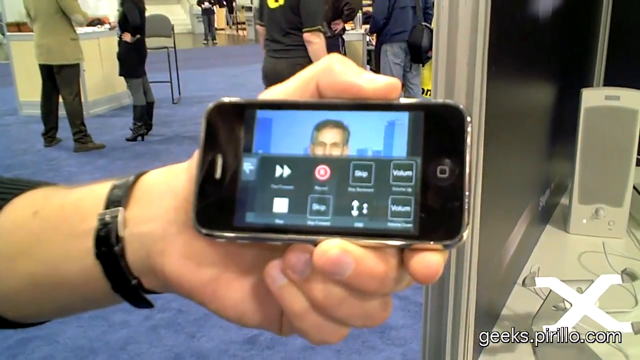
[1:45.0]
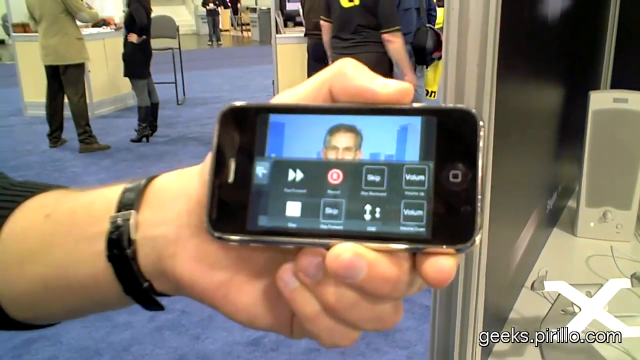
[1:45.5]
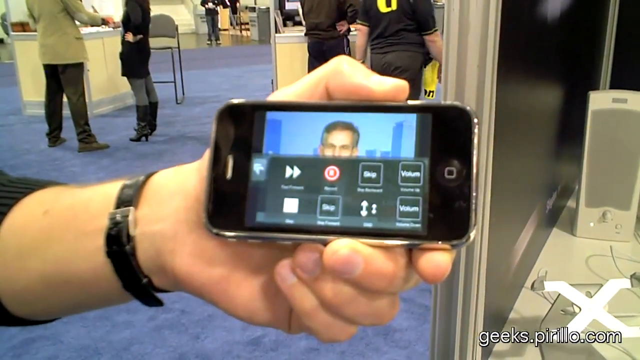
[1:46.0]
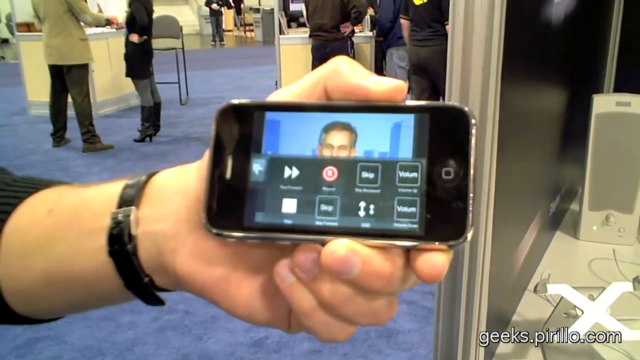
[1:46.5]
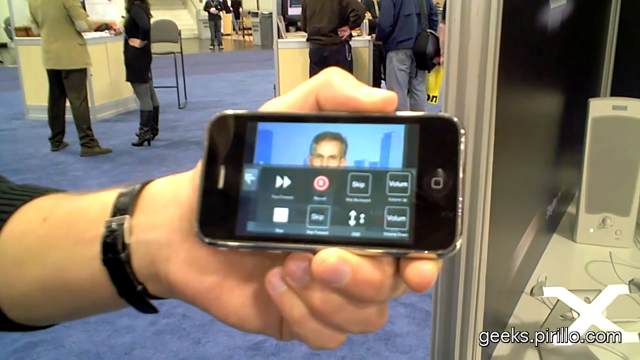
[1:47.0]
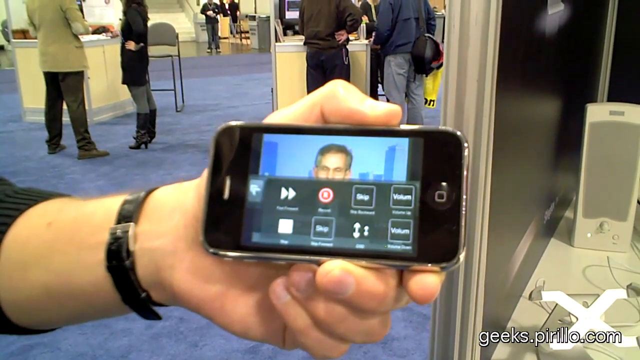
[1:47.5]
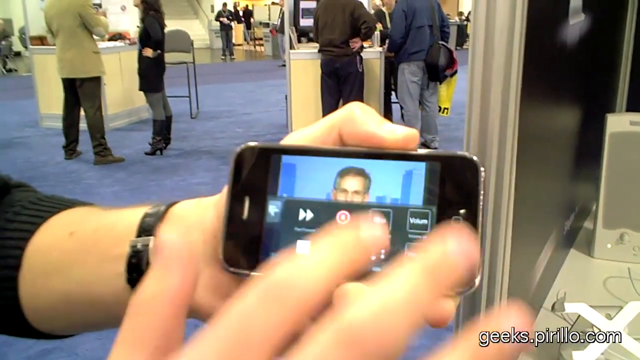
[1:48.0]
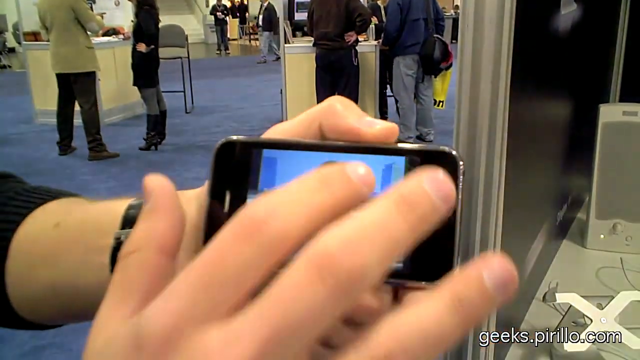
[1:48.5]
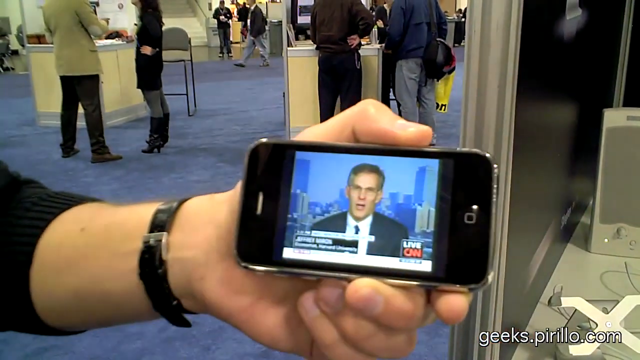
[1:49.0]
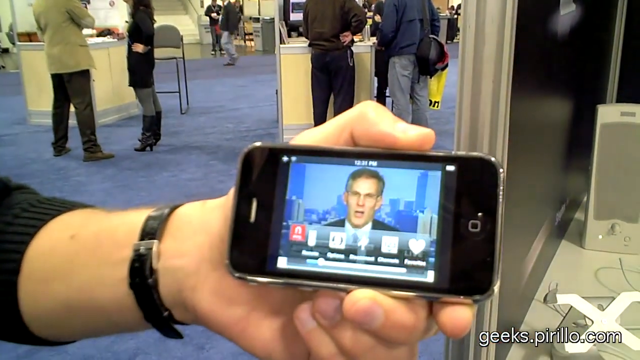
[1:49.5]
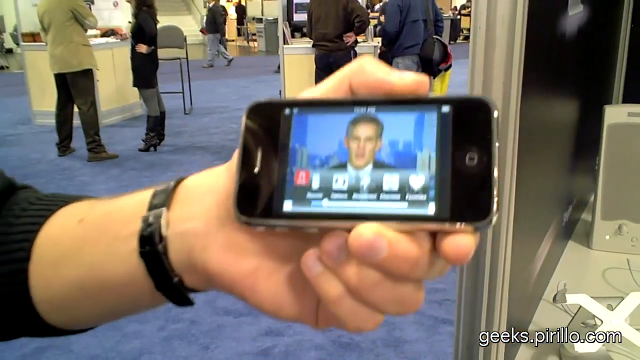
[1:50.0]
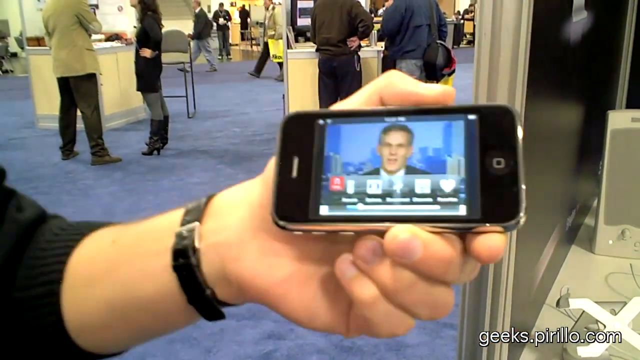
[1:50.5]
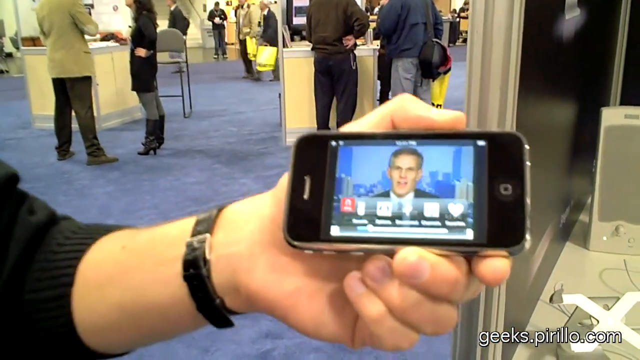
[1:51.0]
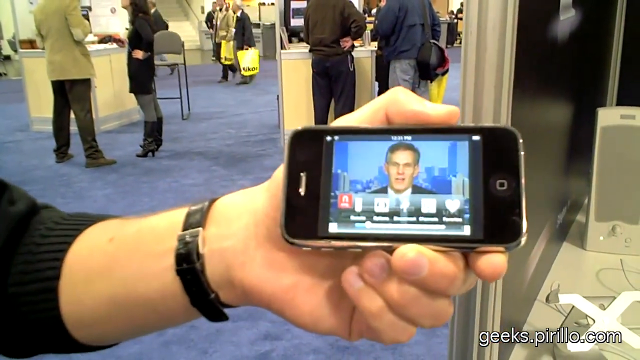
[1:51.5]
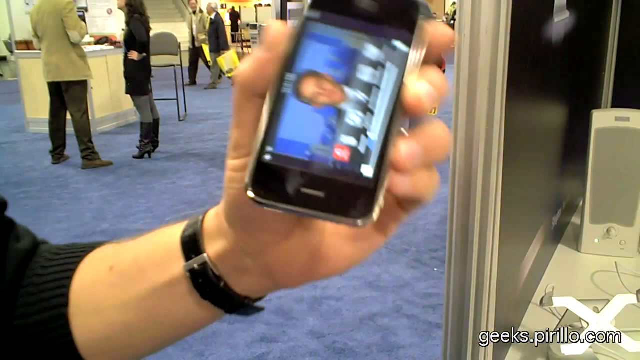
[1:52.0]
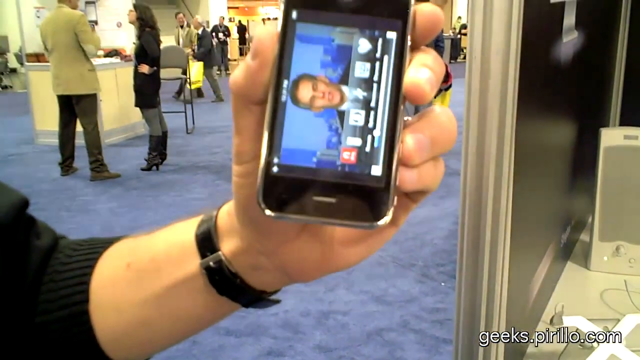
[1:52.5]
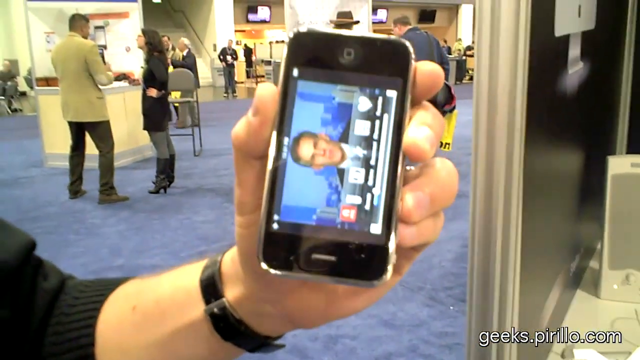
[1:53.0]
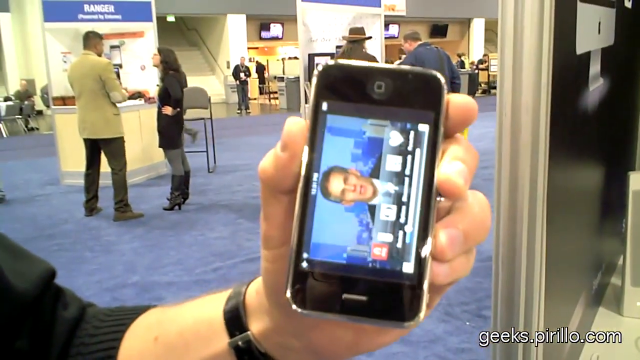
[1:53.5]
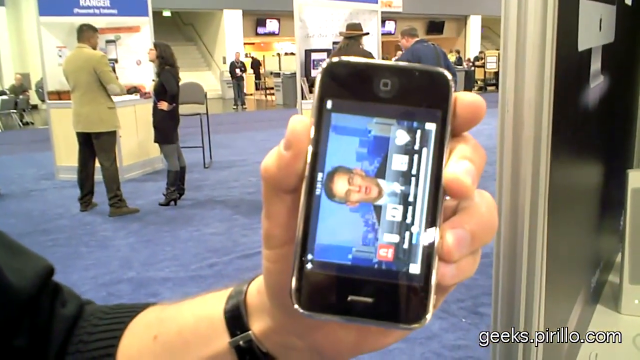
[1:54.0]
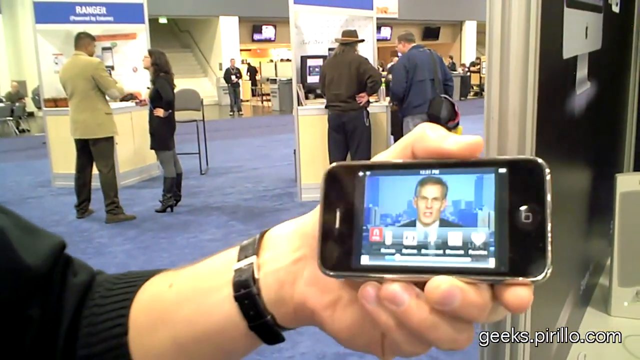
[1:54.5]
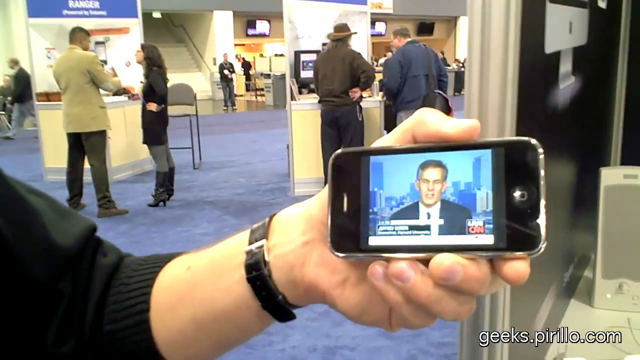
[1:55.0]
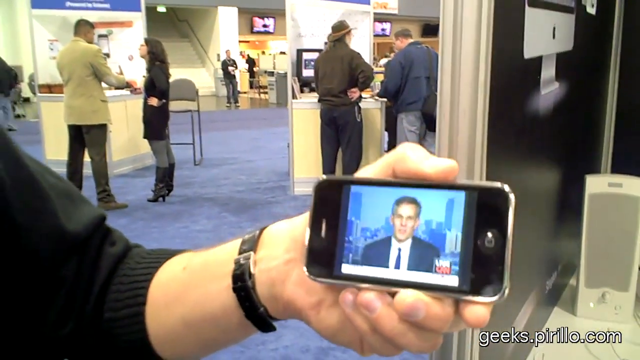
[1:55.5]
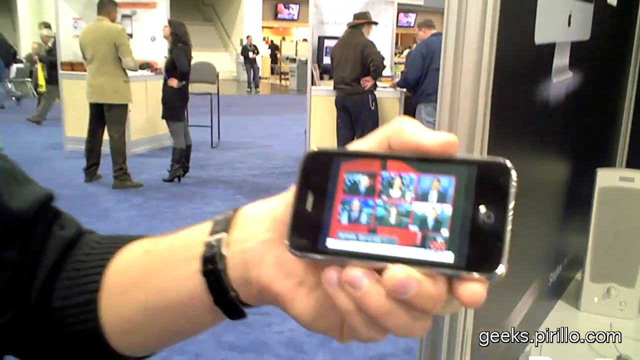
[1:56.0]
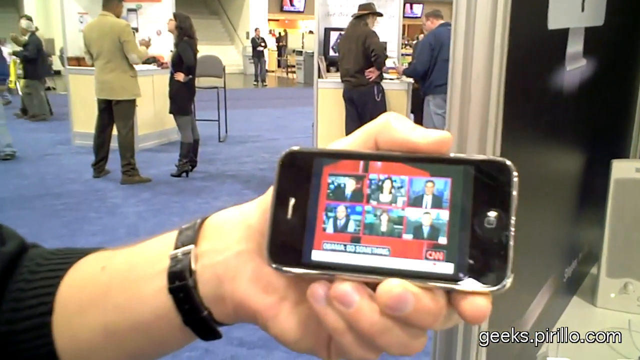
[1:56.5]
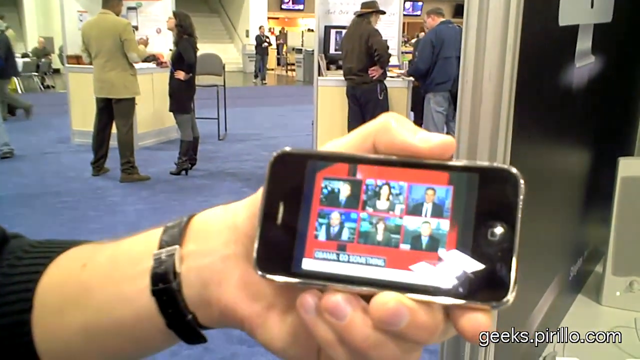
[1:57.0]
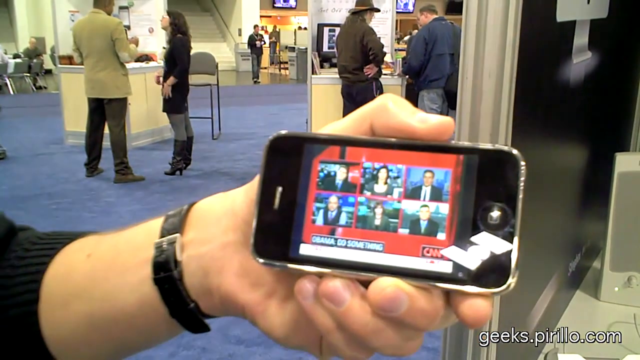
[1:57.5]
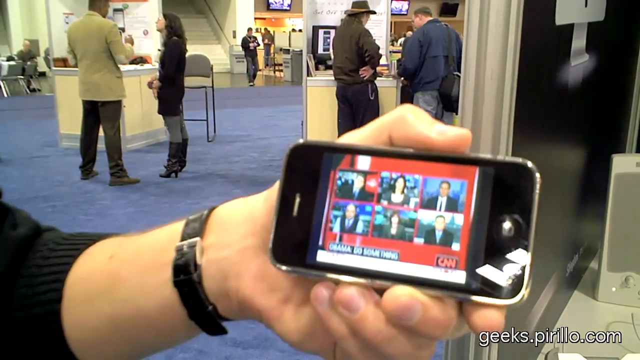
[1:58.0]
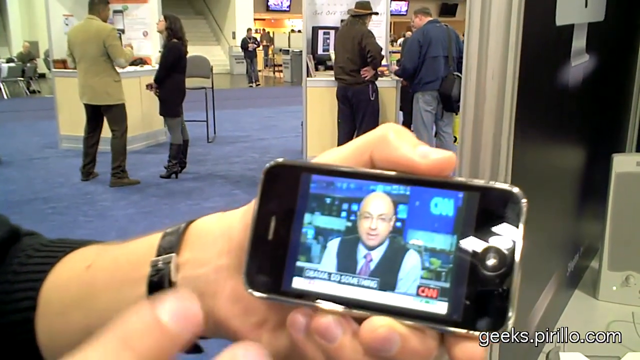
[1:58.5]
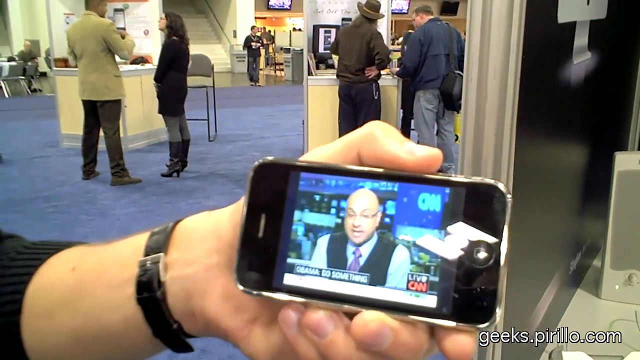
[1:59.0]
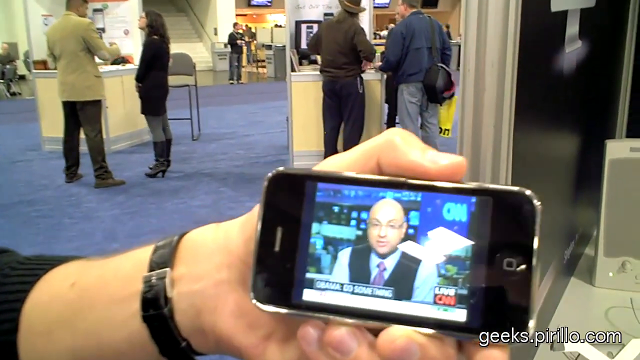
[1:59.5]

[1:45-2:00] The CNN broadcast is shown with a left-hand menu already on display. The man taps the screen, and the menu contracts and goes away. Another menu appears at the bottom of the screen with a variety of icons, including a heart. The man turns the phone horizontally, but the screen does not rotate and stays the same. He turns it back to the vertical position, and the six-person split screen from the CNN broadcast is visible, which then transitions back to the single anchor.